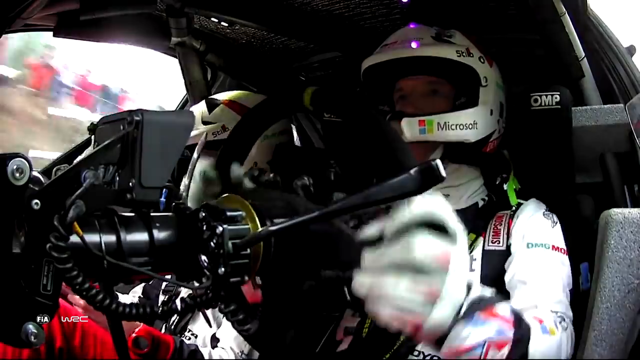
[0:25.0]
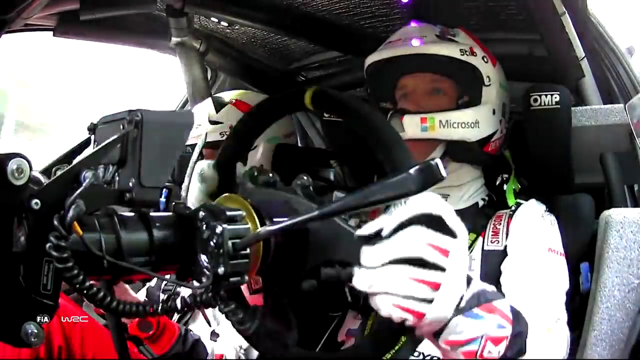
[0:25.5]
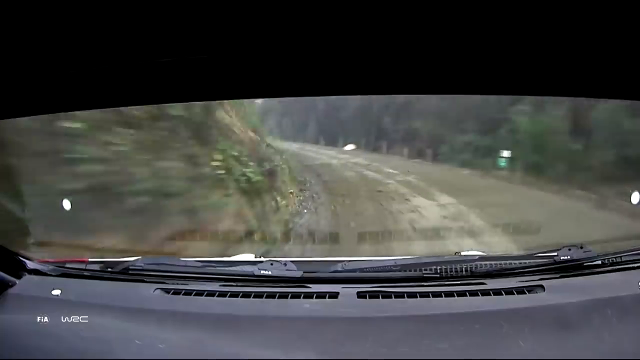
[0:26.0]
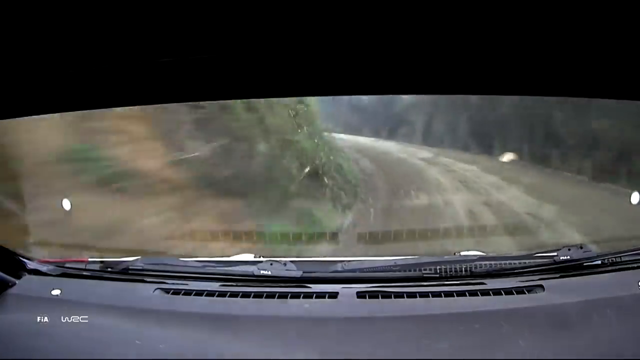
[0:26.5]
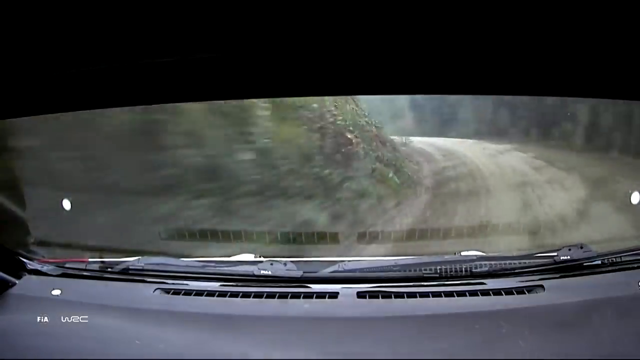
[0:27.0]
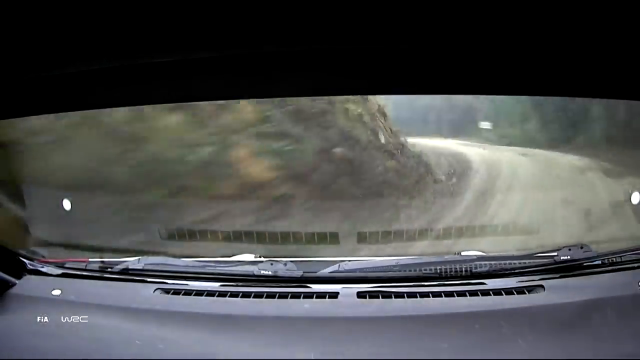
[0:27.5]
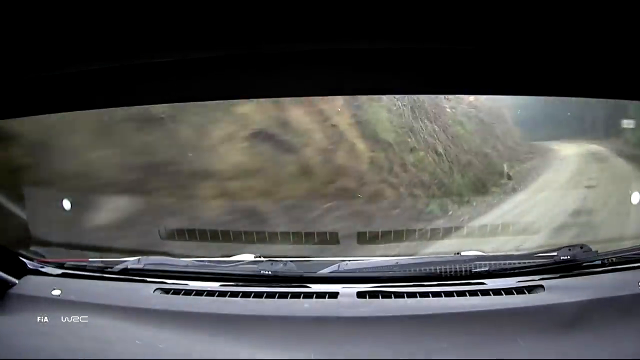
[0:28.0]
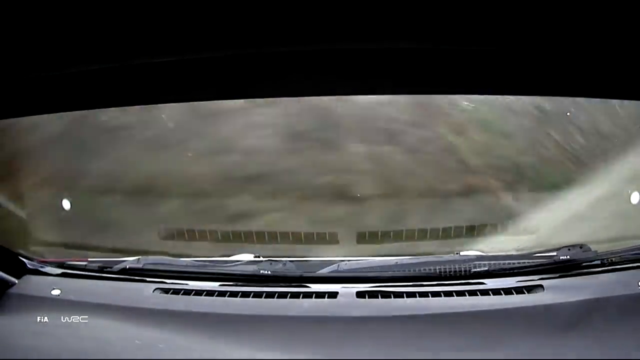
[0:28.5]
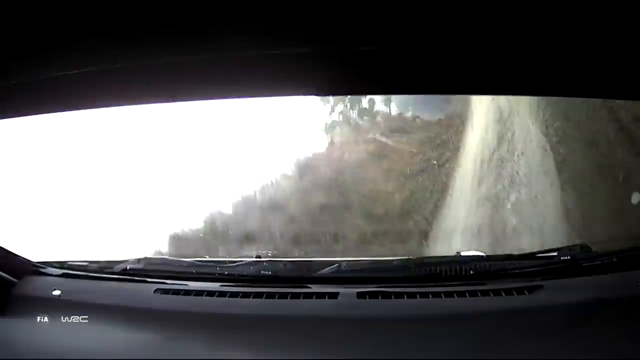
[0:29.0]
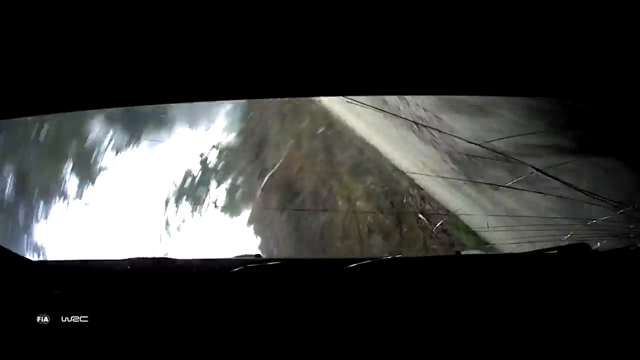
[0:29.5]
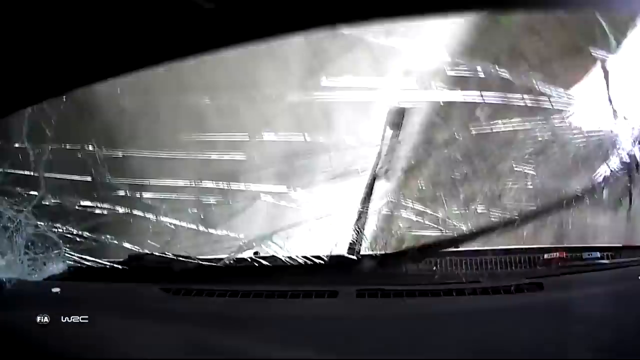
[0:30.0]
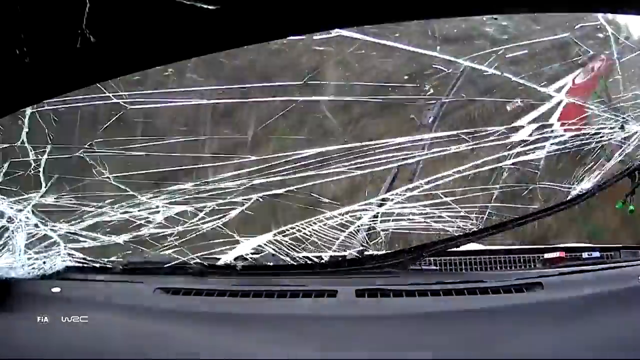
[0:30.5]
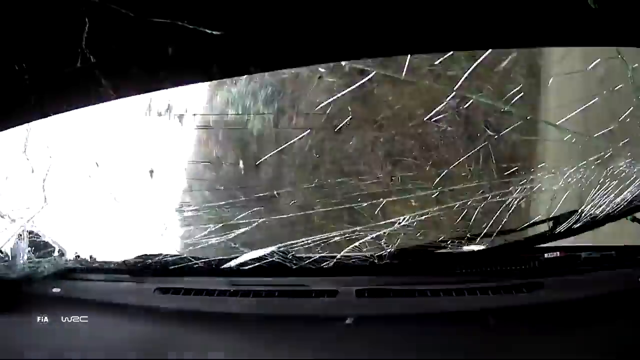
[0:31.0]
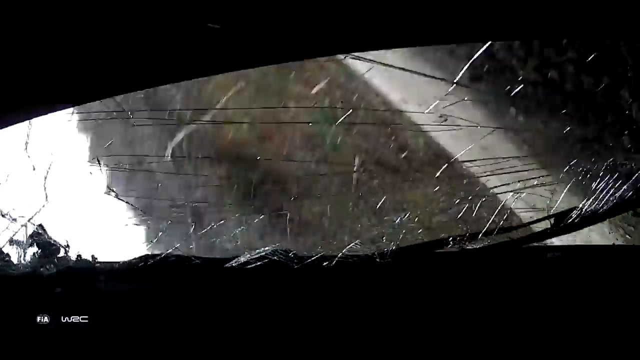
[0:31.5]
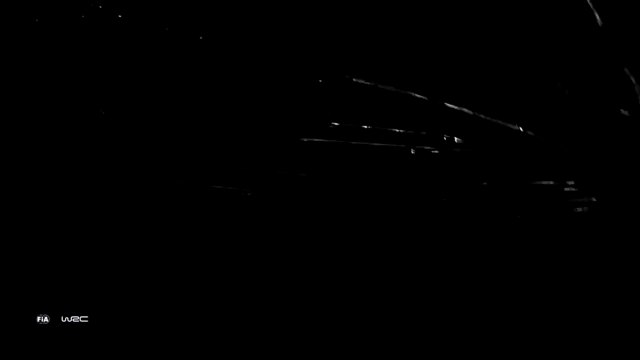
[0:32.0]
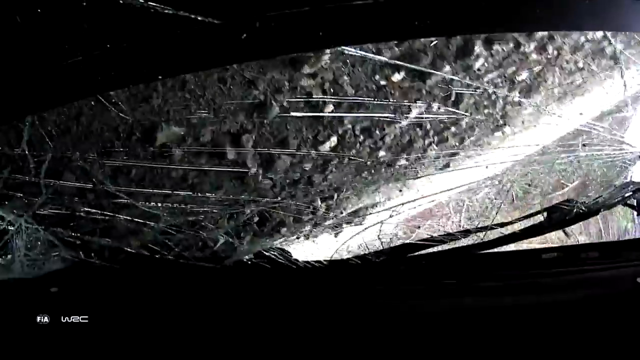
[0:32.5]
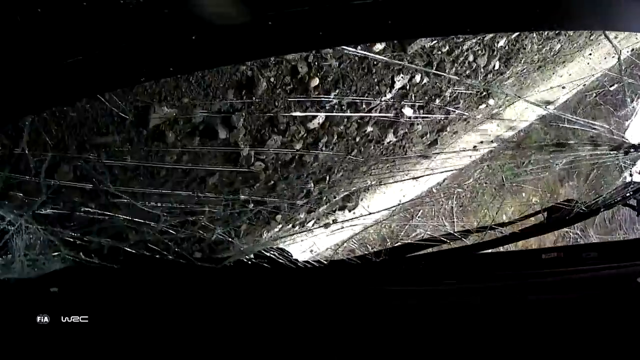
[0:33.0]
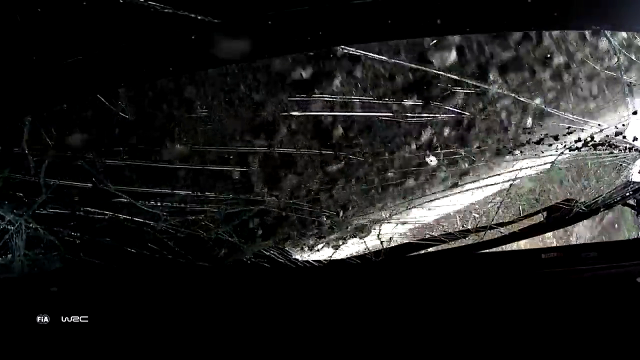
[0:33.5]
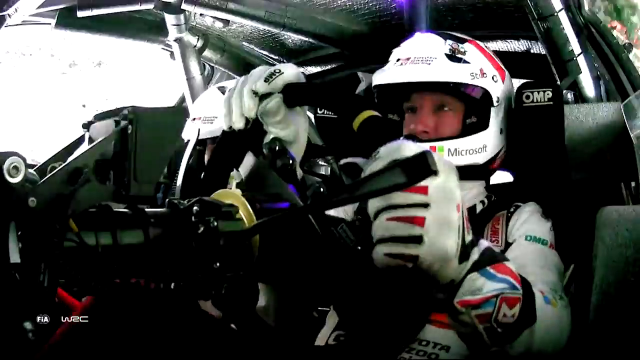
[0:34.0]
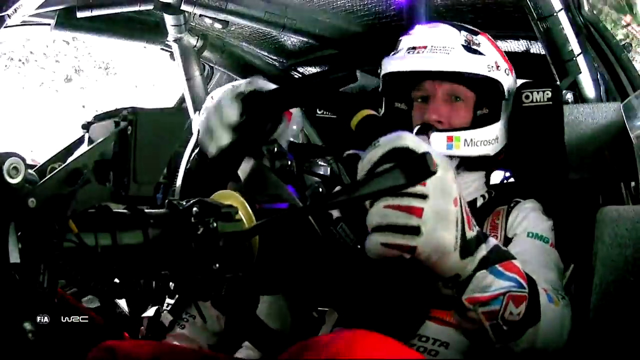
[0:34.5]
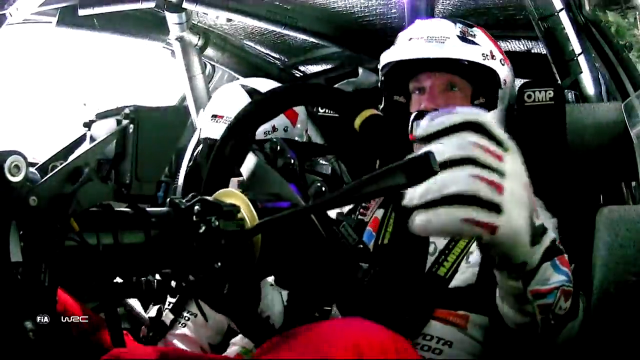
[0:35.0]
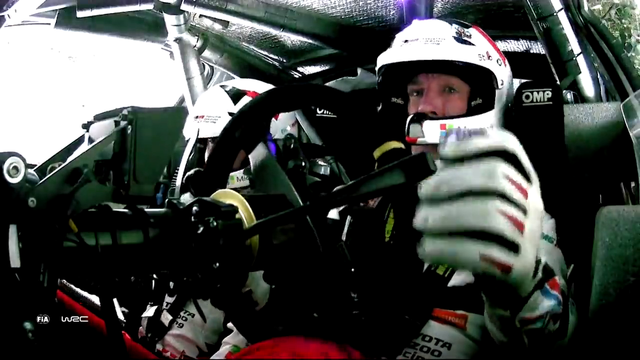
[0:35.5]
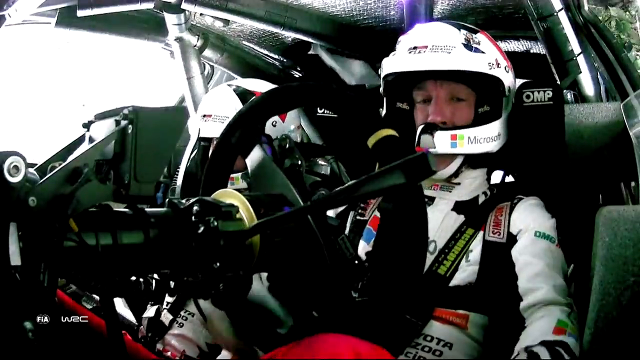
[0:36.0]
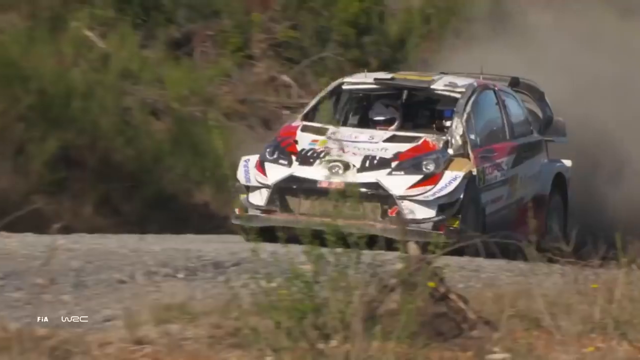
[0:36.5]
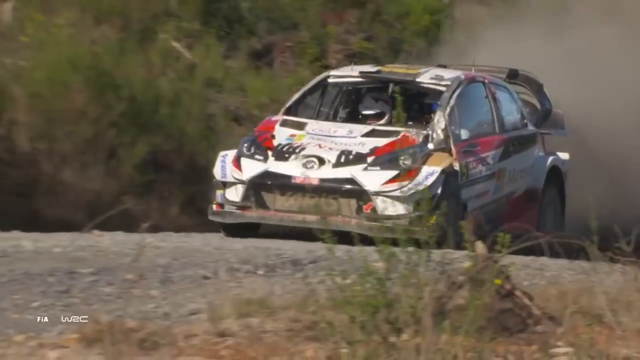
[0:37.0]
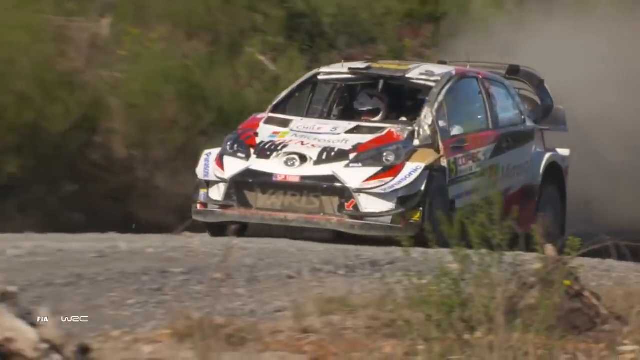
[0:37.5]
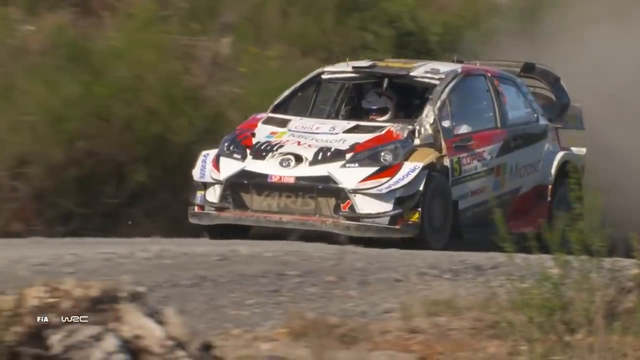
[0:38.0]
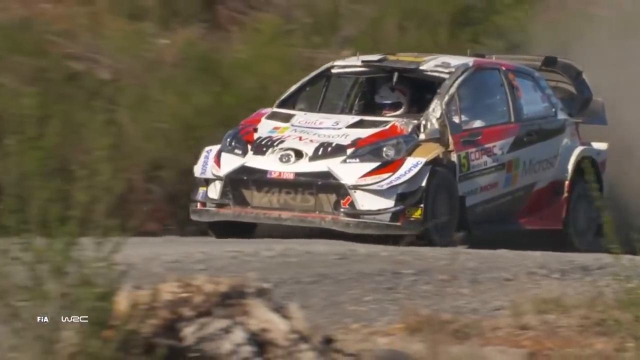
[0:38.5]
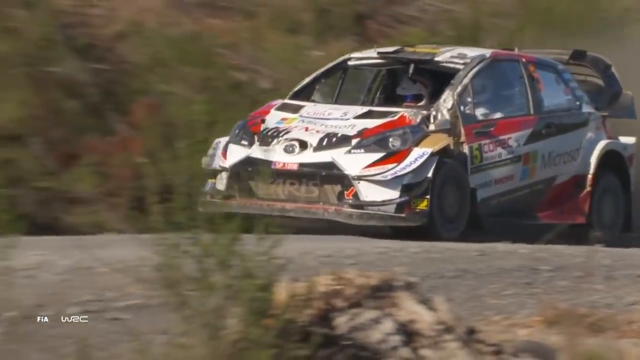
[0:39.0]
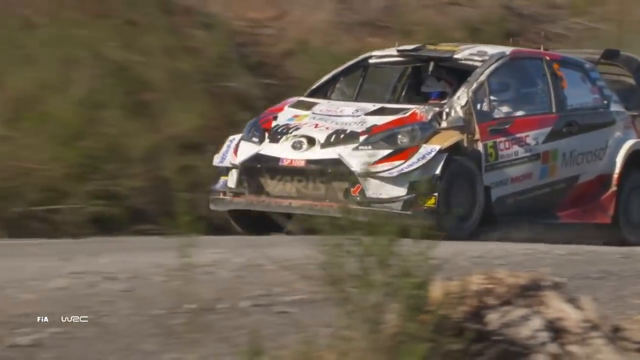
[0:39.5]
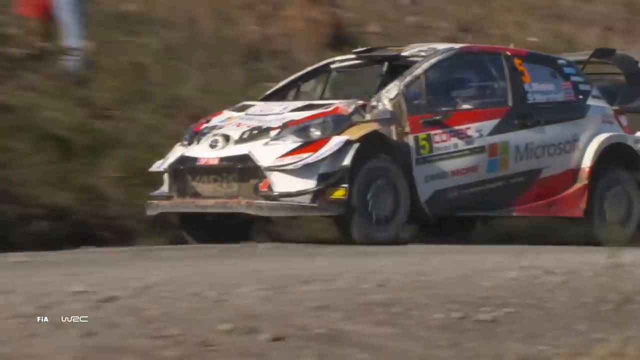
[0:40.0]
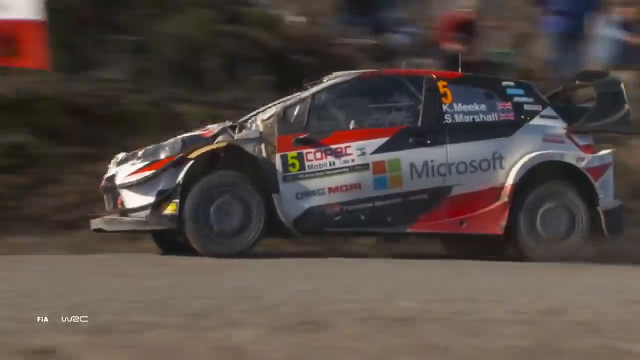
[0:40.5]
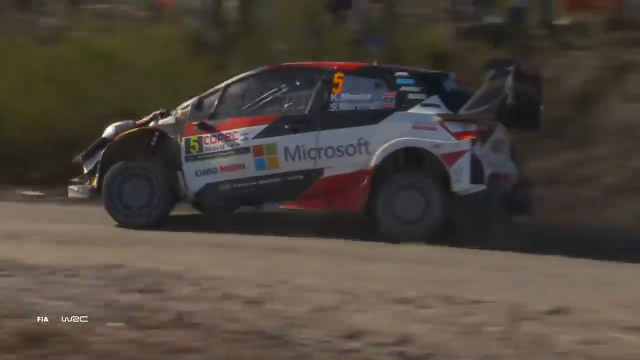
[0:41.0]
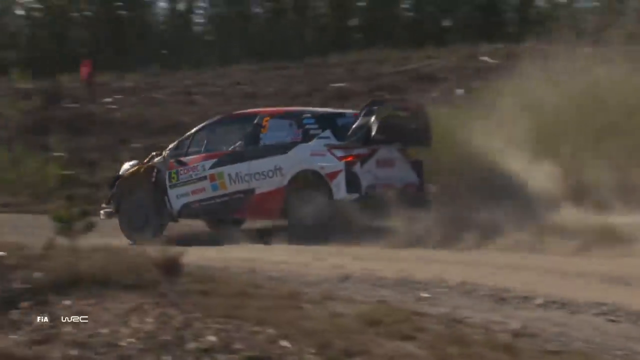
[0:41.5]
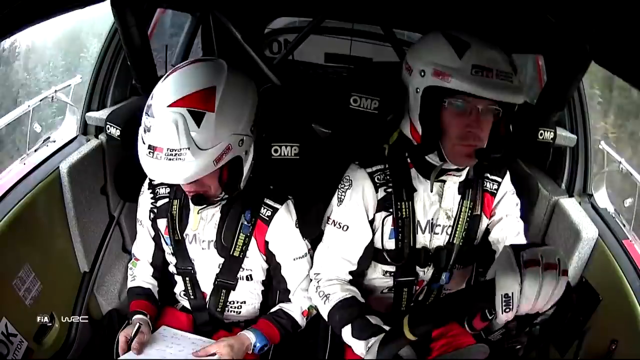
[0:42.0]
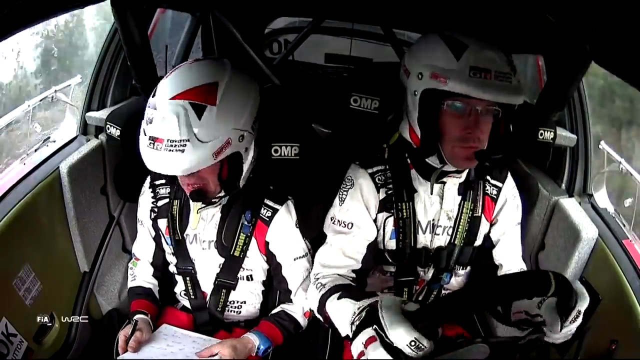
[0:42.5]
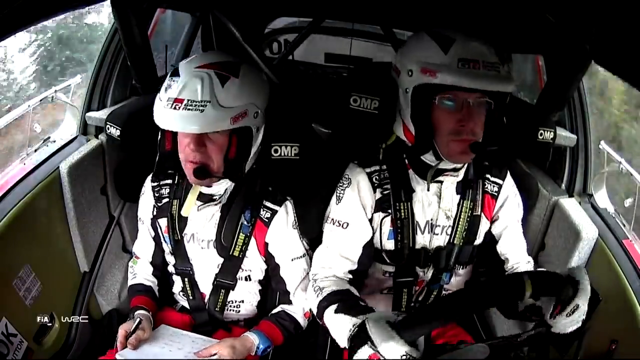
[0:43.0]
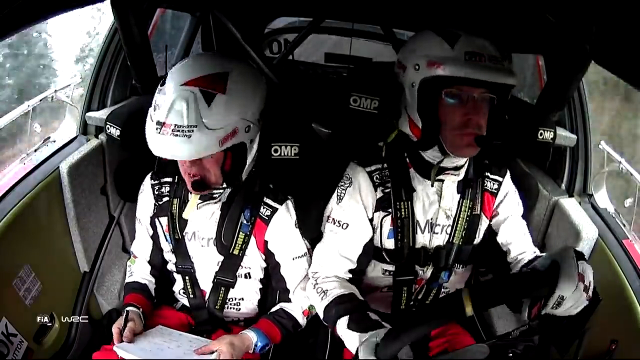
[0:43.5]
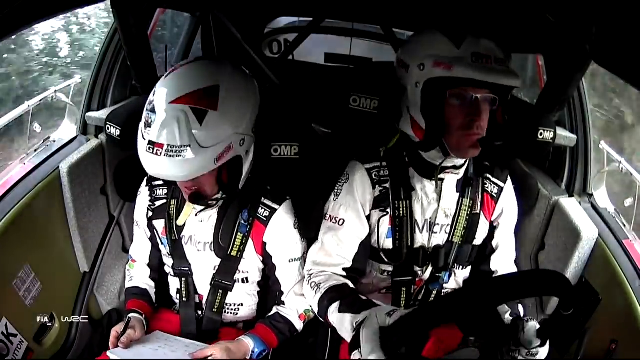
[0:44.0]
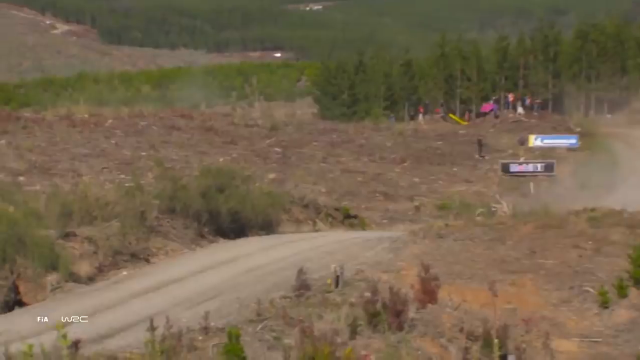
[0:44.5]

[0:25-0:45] An in-car camera on a very curvy outdoor mud track shows a wreck, with the windshield cracked and broken. Inside the vehicle are two people, a driver and his passenger, both wearing heavy protective gear including gloves and helmets with face guards. The passenger has a notebook and is taking notes of some sort, maybe checking speed or reporting back to the pit crew. Both the driver and the passenger have microphones, apparently for communicating with their crew. As the vehicle tumbles, they lie on their side, and the windshield is totally shattered. At a certain point the vehicle appears to get up and continue the race without its windshield and side windows.